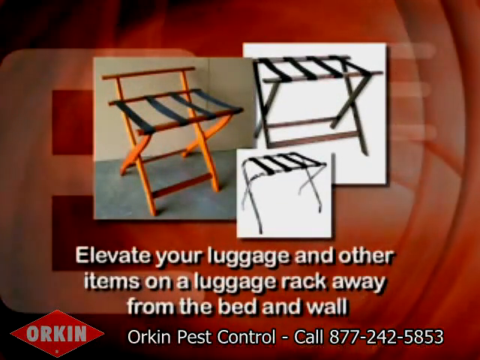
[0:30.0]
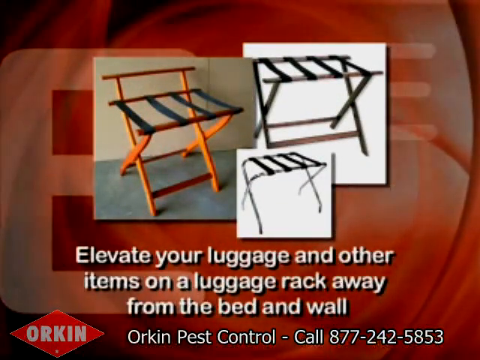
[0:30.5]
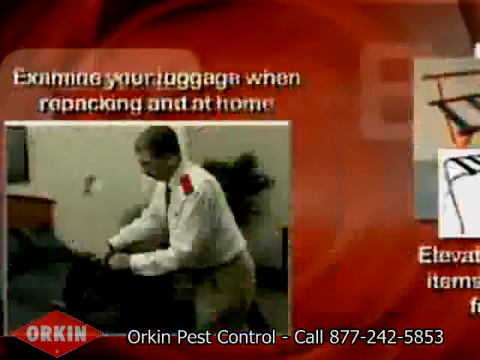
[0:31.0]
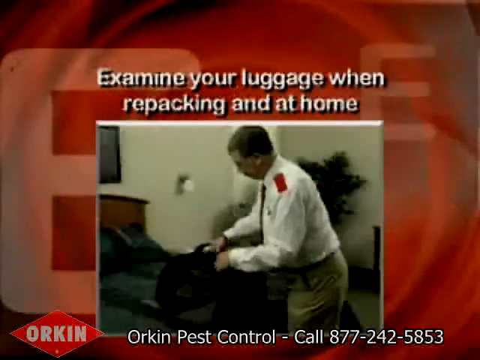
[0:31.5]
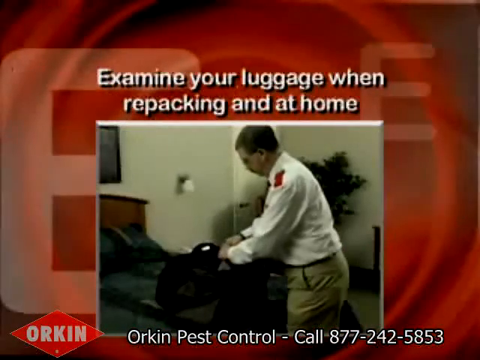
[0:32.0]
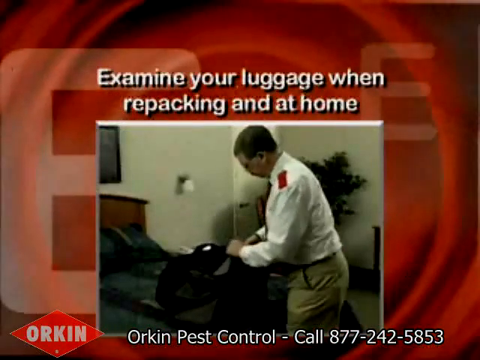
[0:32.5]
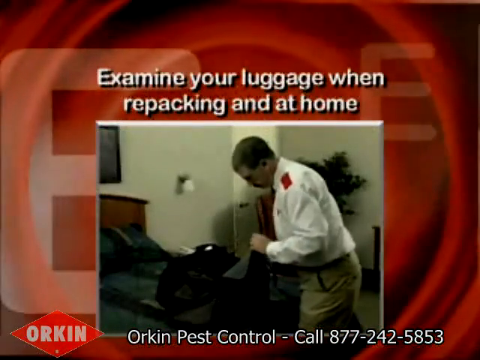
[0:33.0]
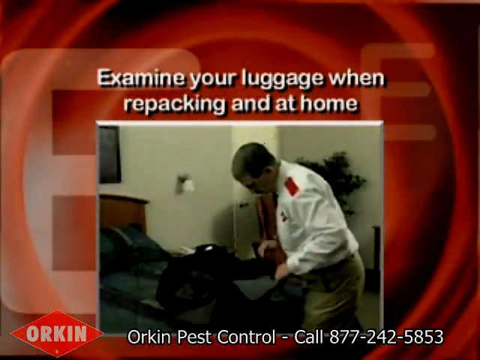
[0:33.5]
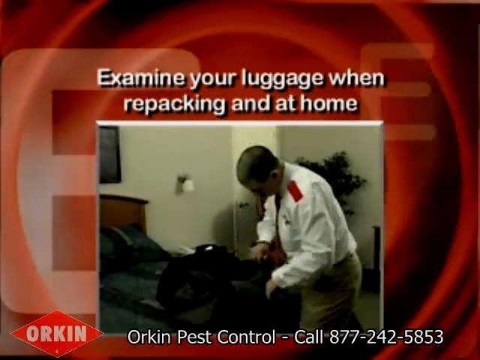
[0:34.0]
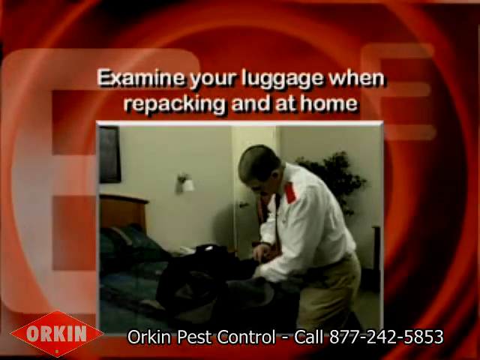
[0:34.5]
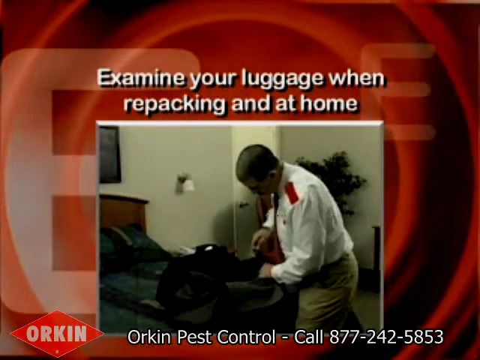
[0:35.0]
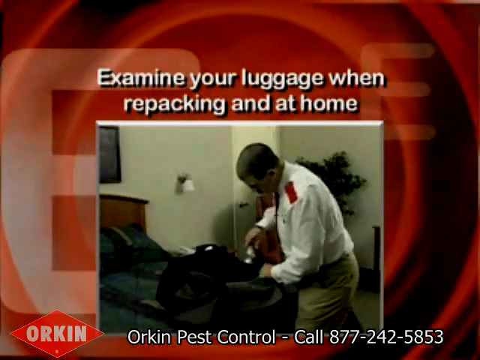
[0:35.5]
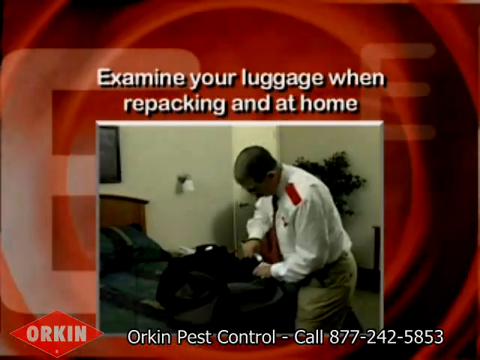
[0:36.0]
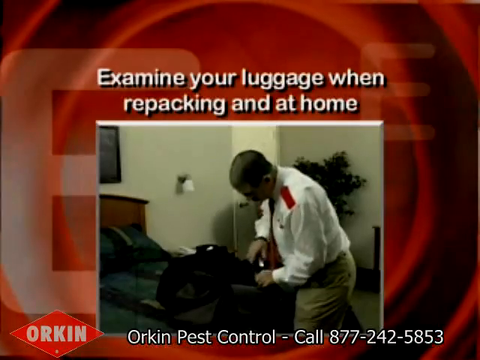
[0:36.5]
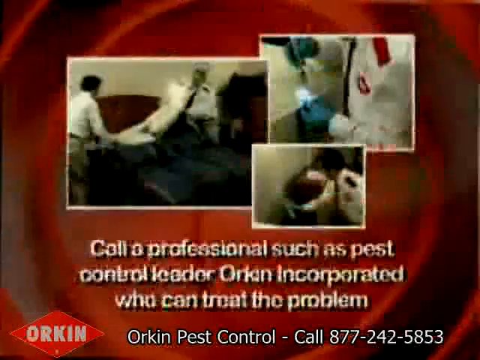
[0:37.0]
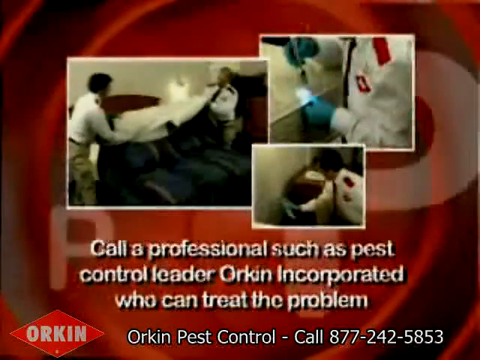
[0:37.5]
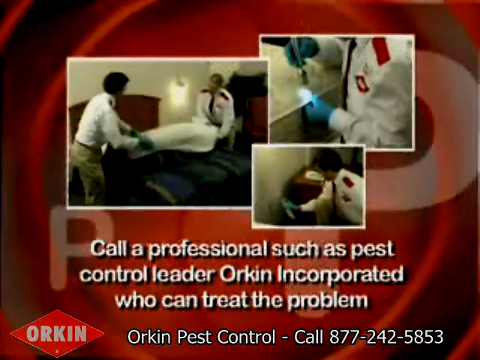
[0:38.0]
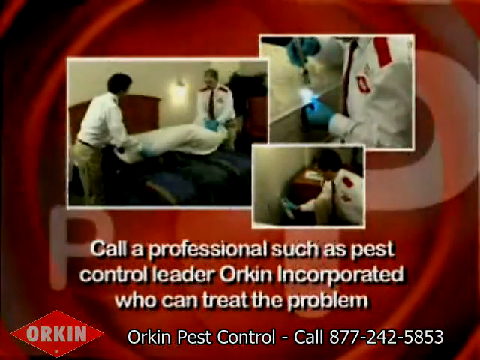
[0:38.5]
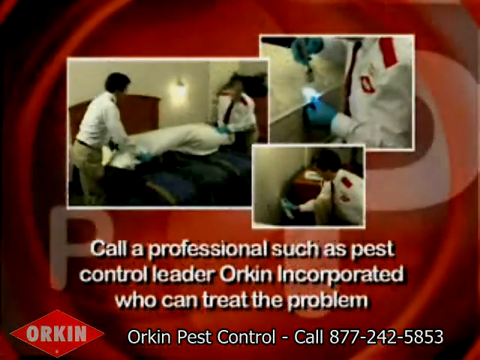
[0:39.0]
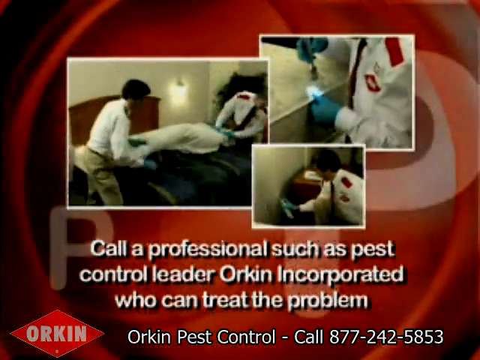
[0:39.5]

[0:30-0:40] Different items are shown: one is almost TV-style, one is a more orange-ish brown item with black straps running lengthwise, there is another one, and one is metal, each picture centered. An "E" for Orkin is in the background, with animated red swirly shapes in lighter and darker shades. An Orkin man unzips a bag and looks through it with a flashlight, this time without gloves. Three videos of different sizes then appear together: in one, two men start on both sides and roll a sheet back; in the top right one, someone inspects the edges of what seems to be a countertop; and in another, someone looks at what appear to be balls. Text underneath says a professional can help treat the problem.